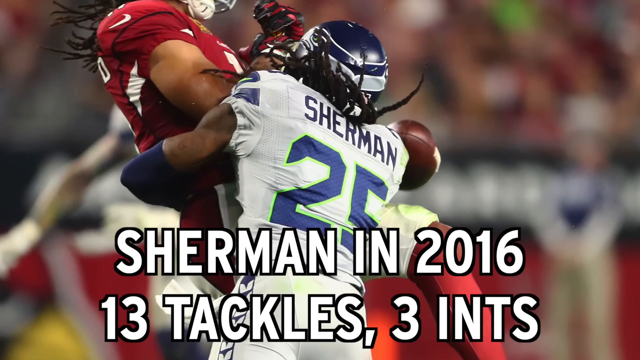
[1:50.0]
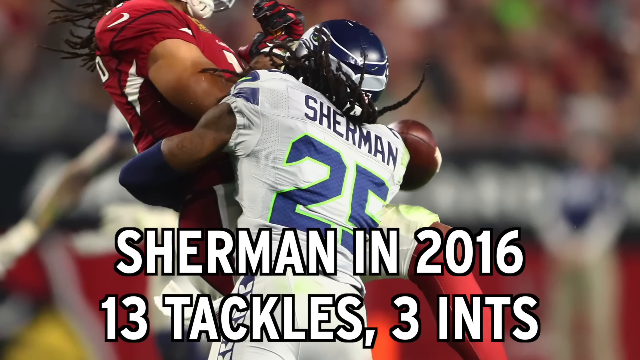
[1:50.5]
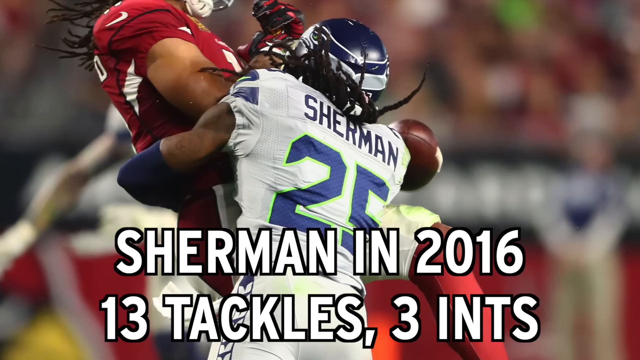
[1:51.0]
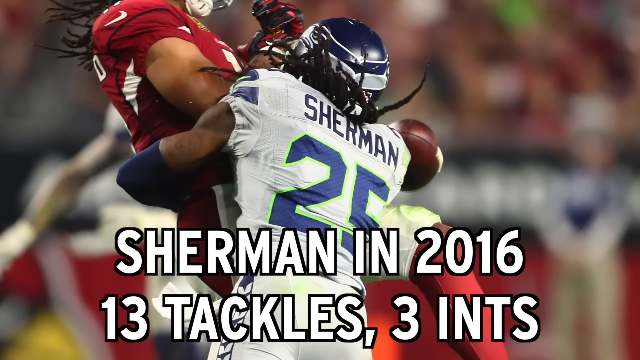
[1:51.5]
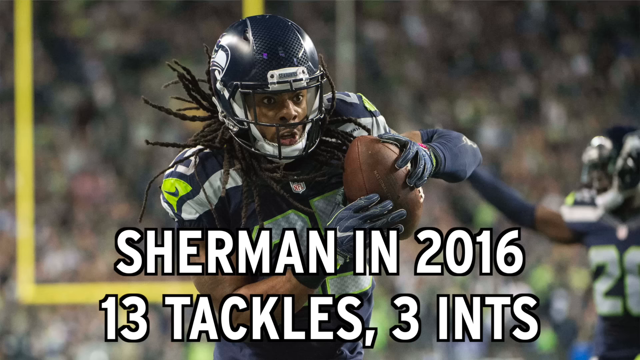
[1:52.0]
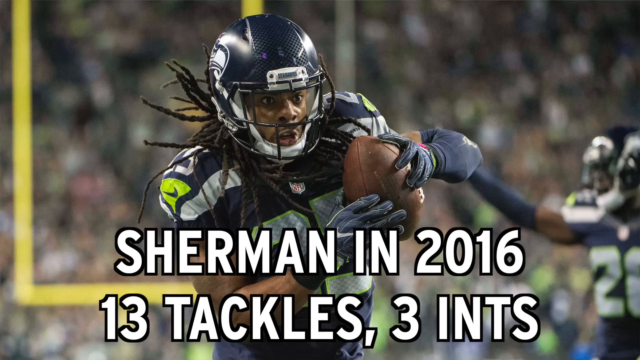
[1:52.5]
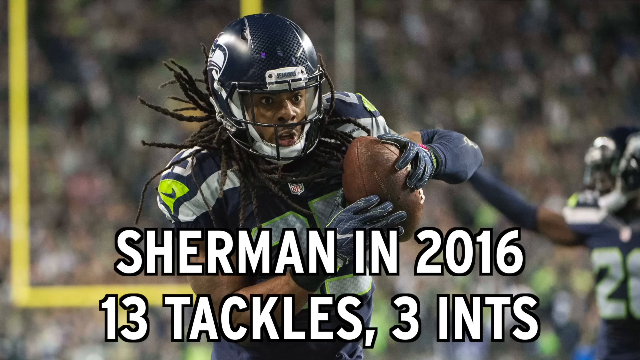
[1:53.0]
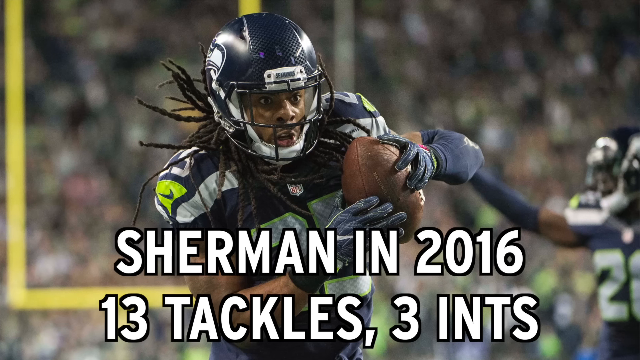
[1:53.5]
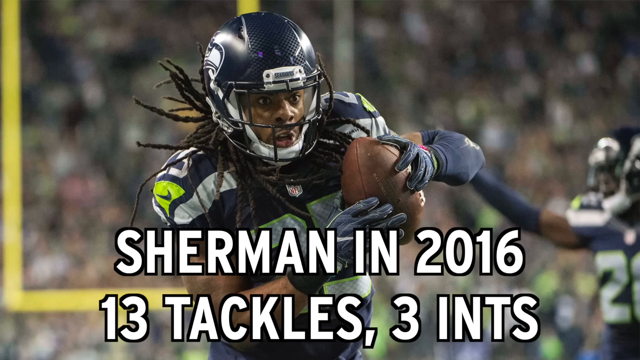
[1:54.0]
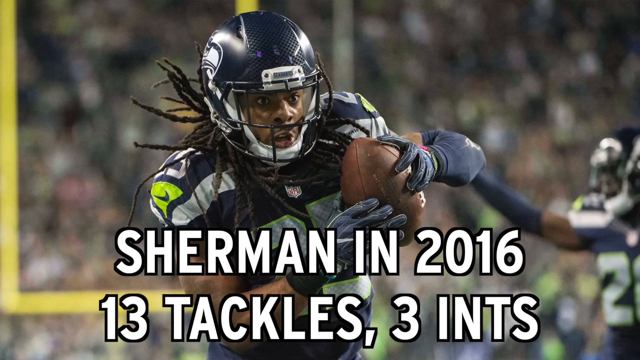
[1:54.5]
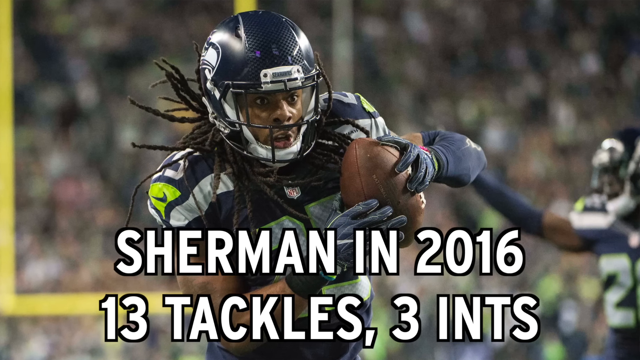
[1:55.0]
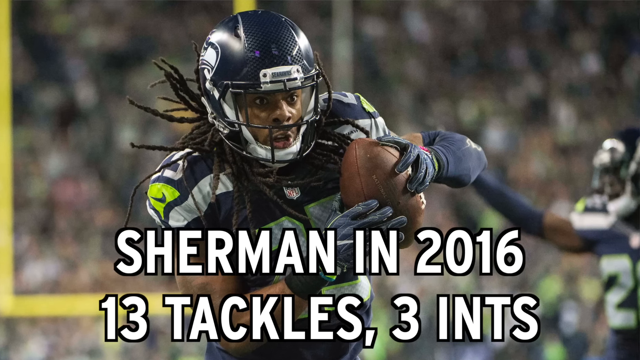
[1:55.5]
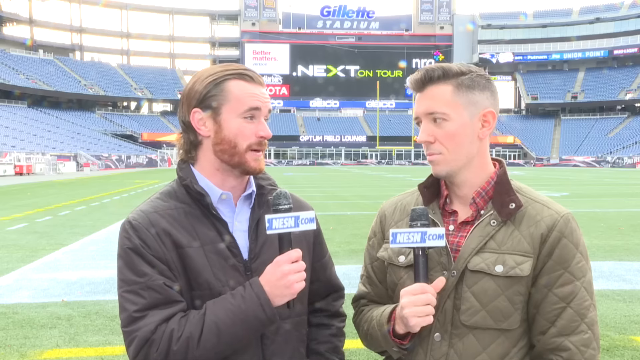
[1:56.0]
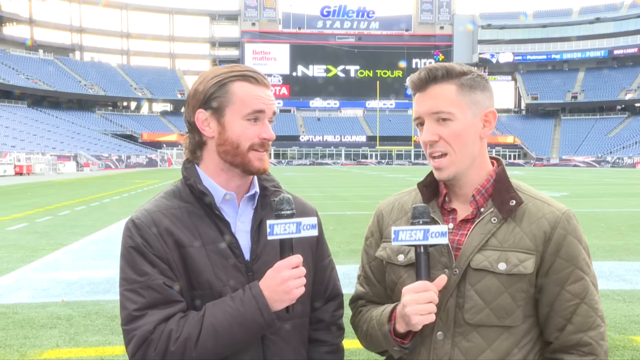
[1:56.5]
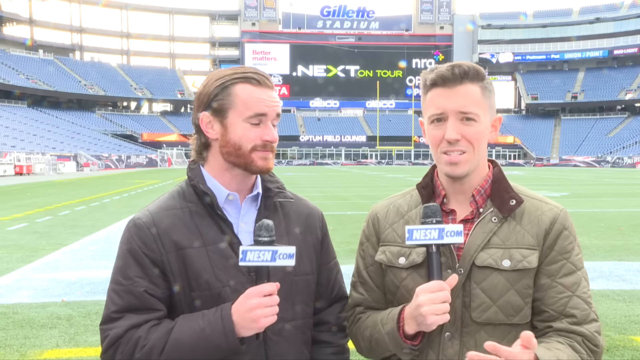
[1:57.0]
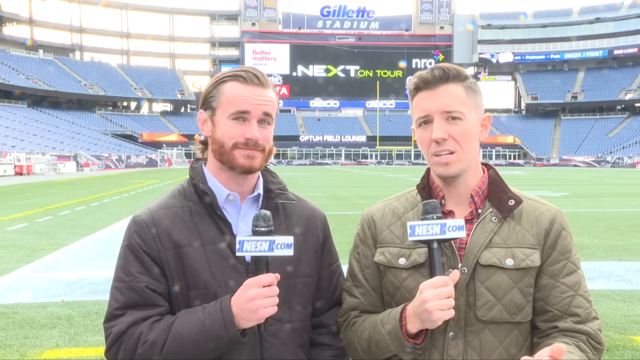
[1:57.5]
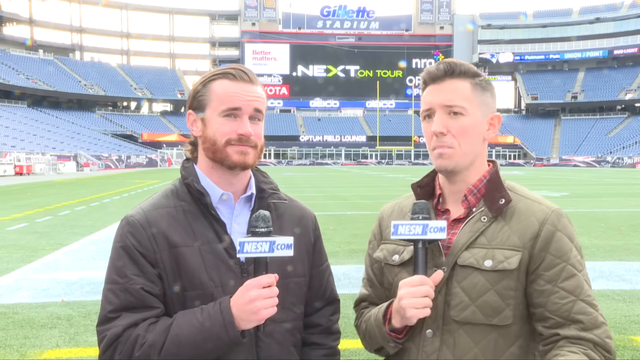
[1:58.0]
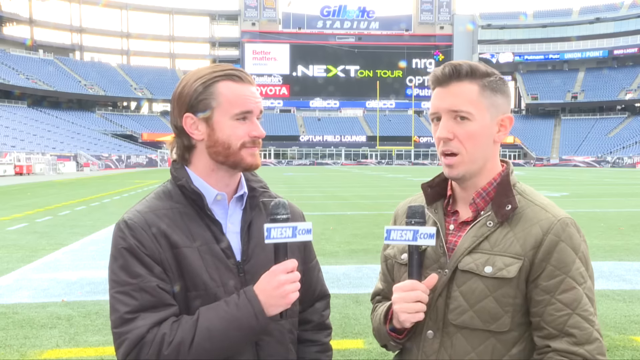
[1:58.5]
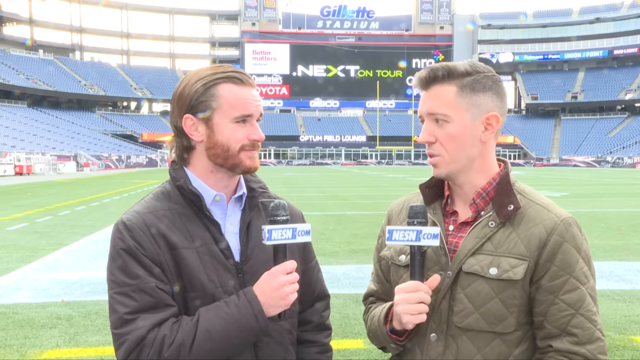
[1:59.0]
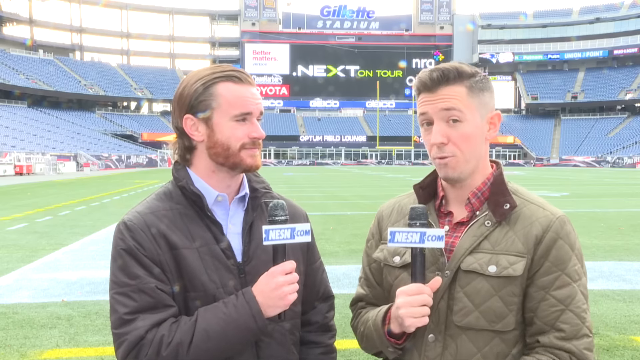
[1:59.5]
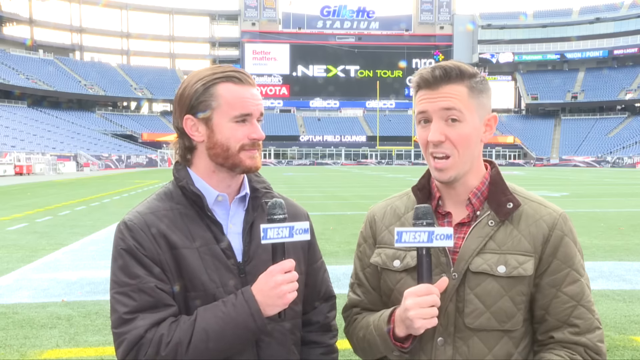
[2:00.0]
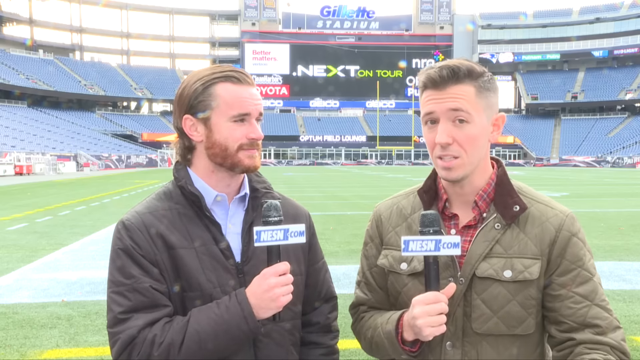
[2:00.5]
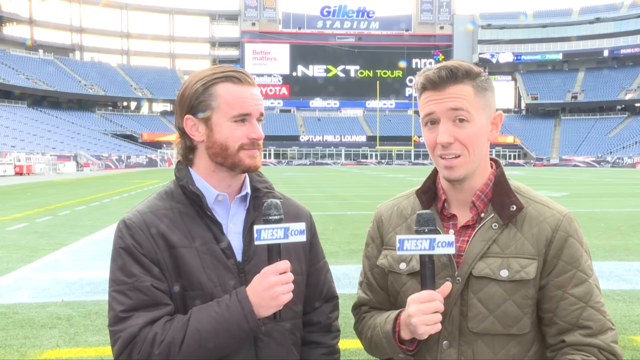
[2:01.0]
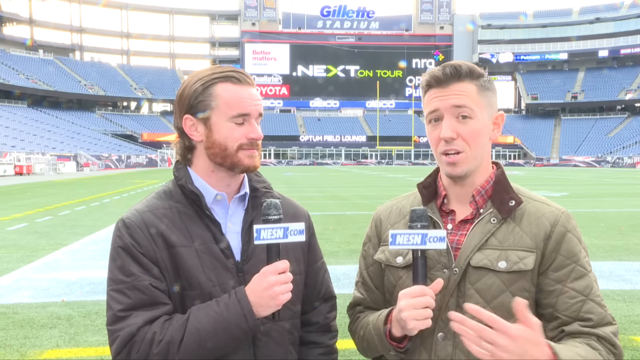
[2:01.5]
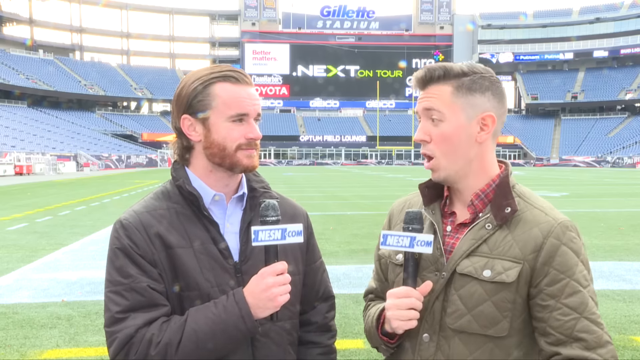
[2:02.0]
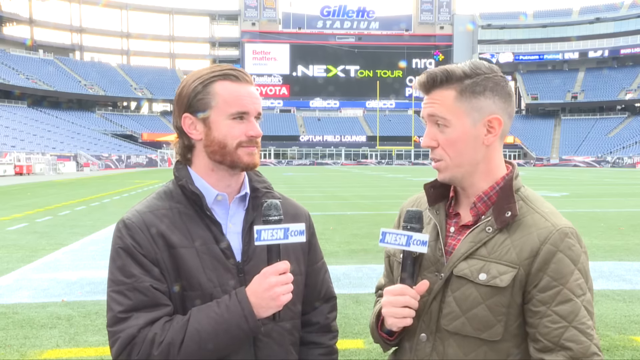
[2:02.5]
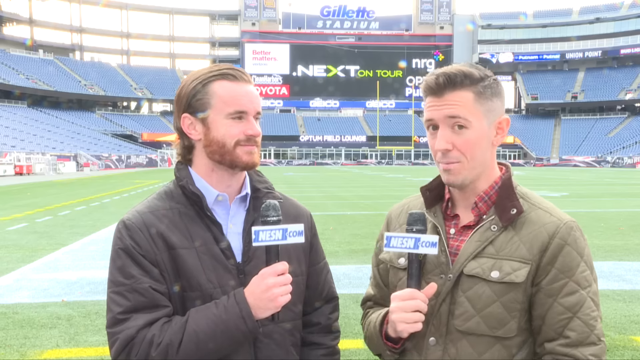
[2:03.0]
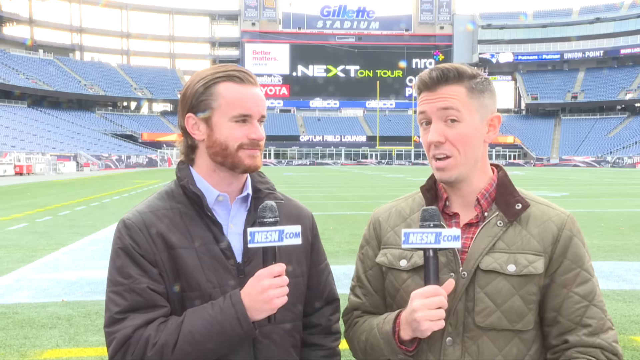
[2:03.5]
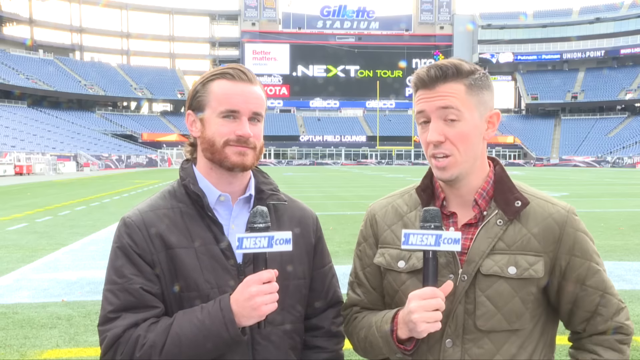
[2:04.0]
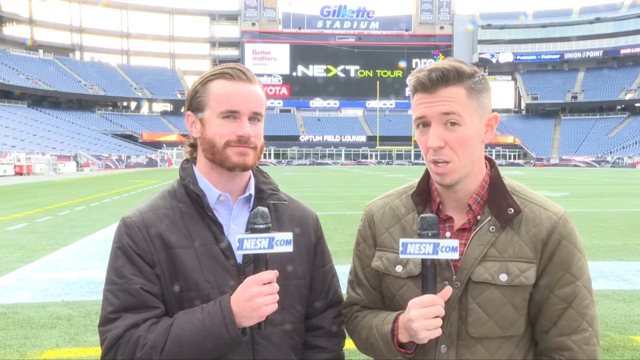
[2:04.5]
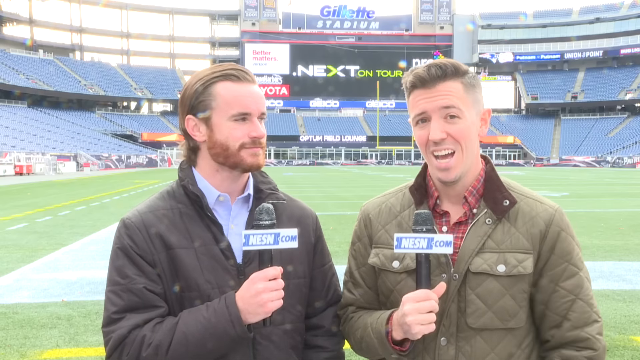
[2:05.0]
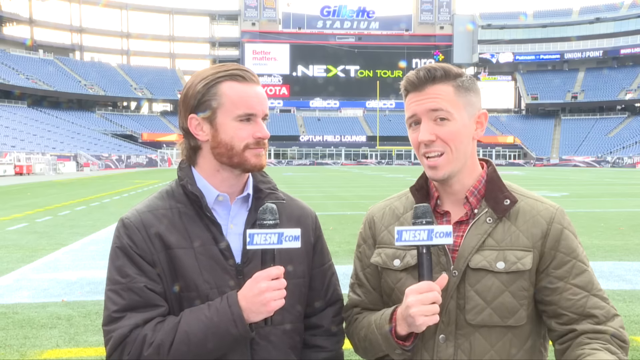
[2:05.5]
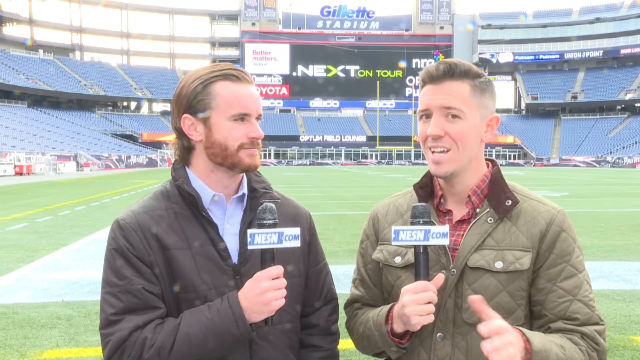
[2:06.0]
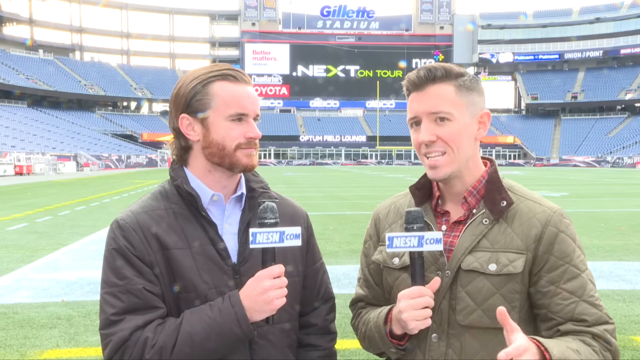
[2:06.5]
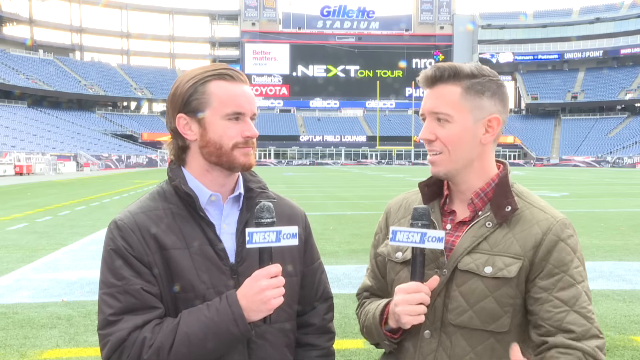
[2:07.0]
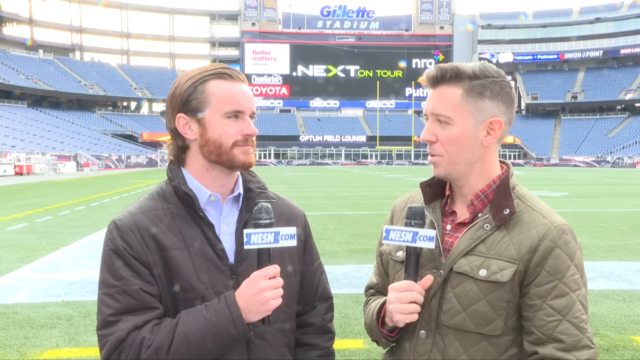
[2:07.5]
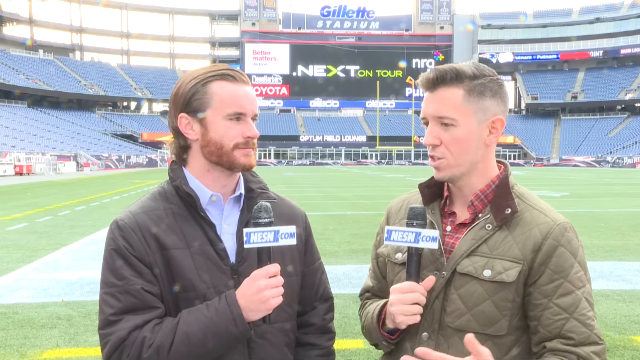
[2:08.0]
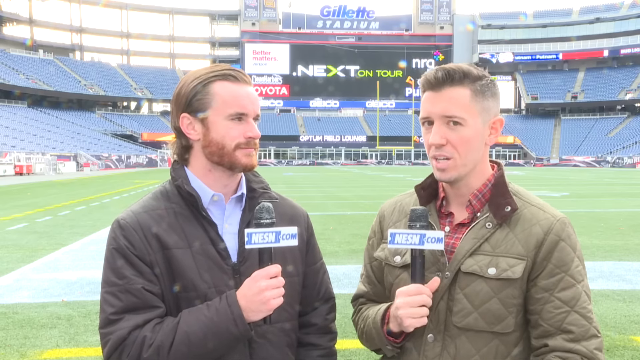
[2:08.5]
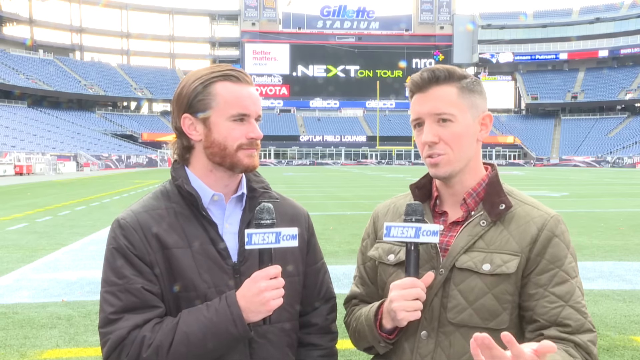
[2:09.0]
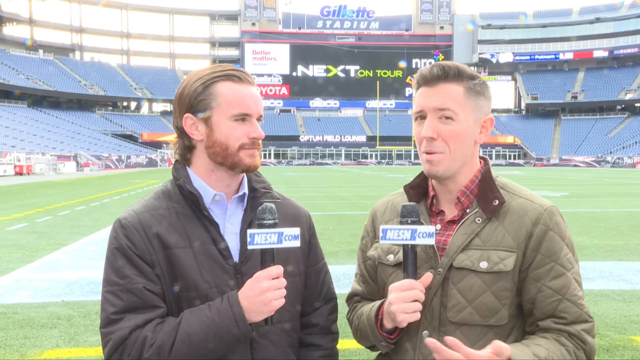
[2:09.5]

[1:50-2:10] Two players appear in a football game with the text "Sherman in 2016, 13 tackles, three interceptions," and Sherman is shown hugging another player as he tackles him. Two reporters for NESN.com hold microphones in their right hands, with a box reading "NESN.com" around them. The stadium is Gillette Stadium, as written at the top, and a blue light moves back and forth in the Gillette sign. There is an illuminated white sign with red writing, and underneath it a red Toyota sign. Something about Optum appears on a lower portion of the stadium seating. Midway up, on top of the seats, a scrolling sign cycles through colors from red to pink to blue.